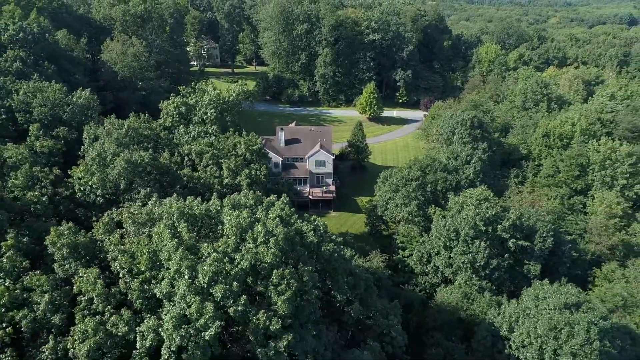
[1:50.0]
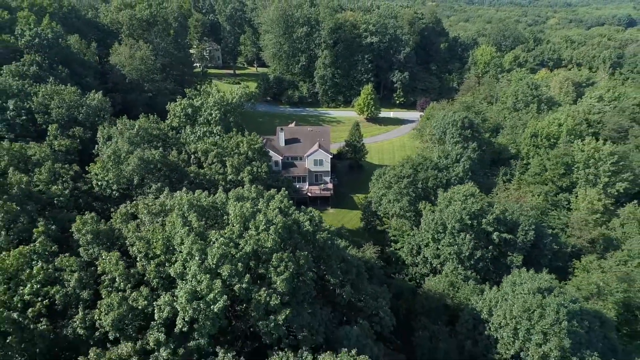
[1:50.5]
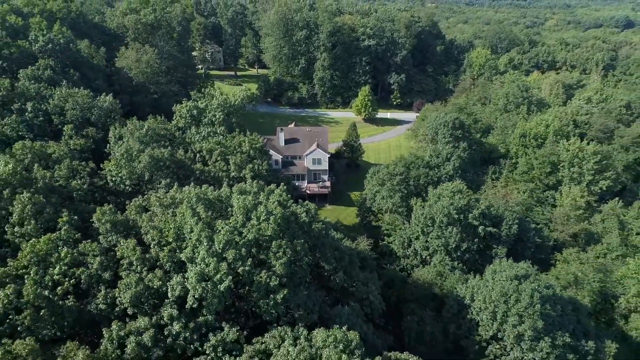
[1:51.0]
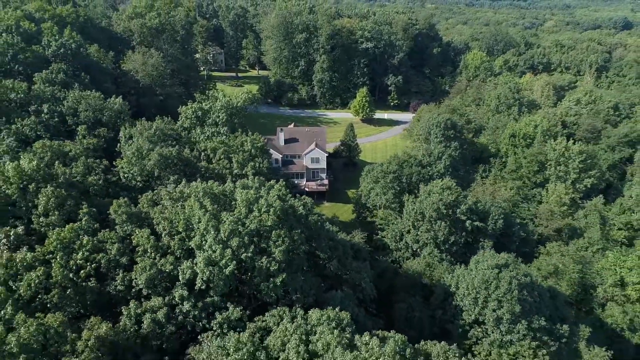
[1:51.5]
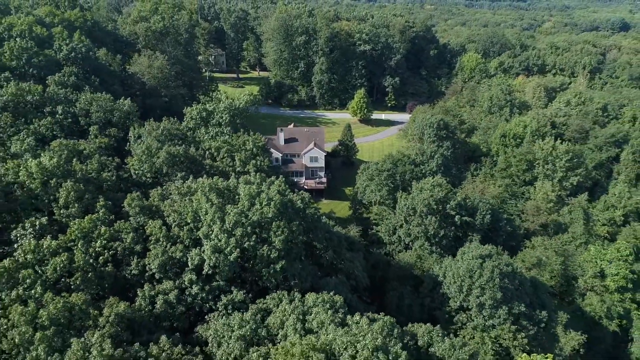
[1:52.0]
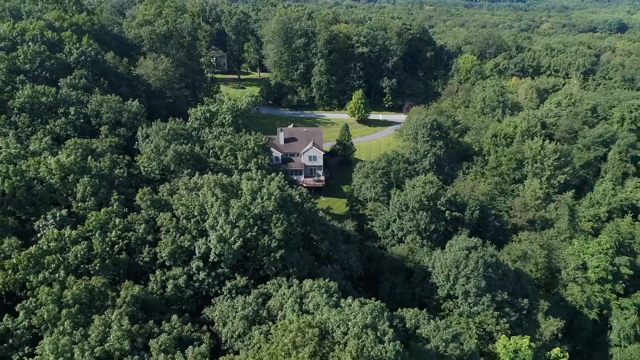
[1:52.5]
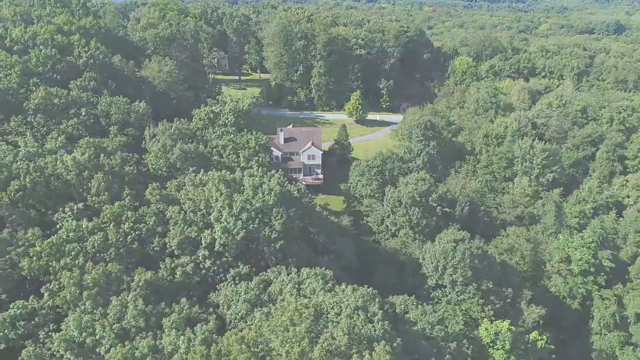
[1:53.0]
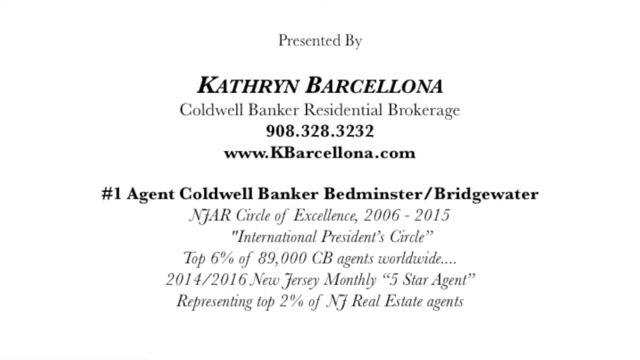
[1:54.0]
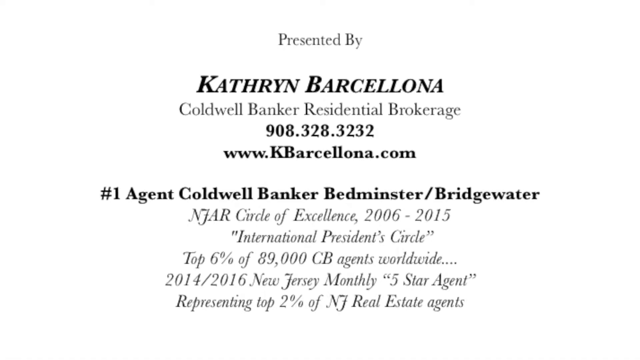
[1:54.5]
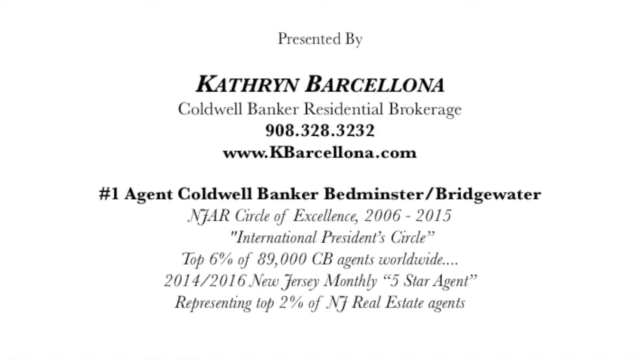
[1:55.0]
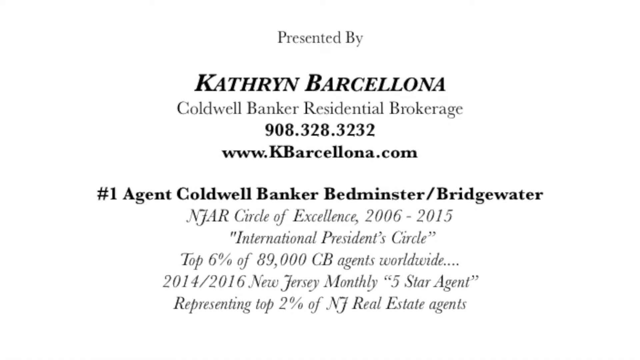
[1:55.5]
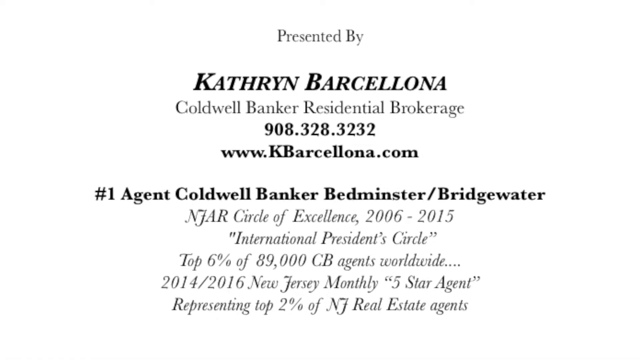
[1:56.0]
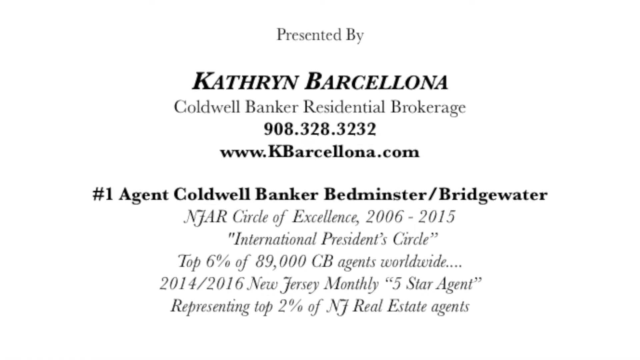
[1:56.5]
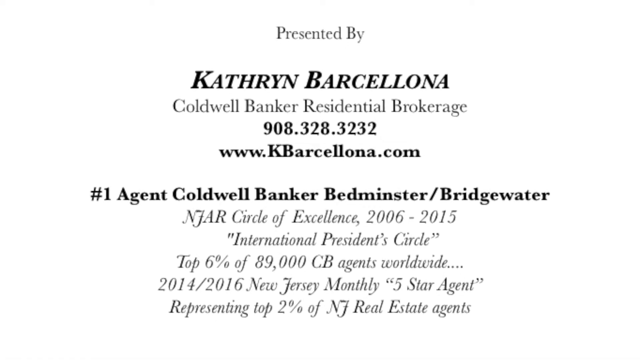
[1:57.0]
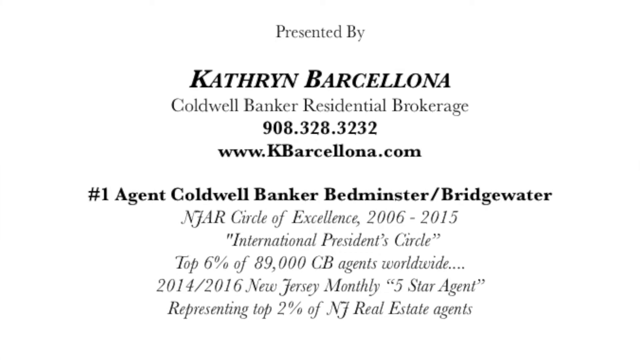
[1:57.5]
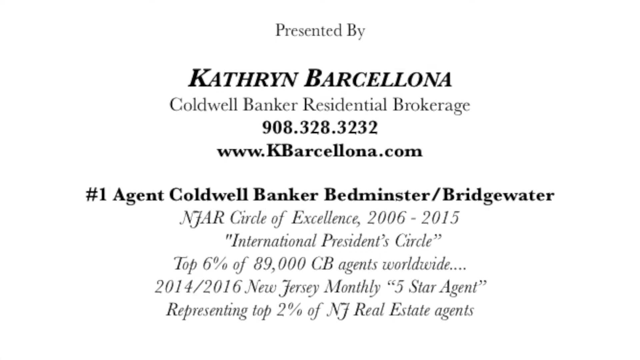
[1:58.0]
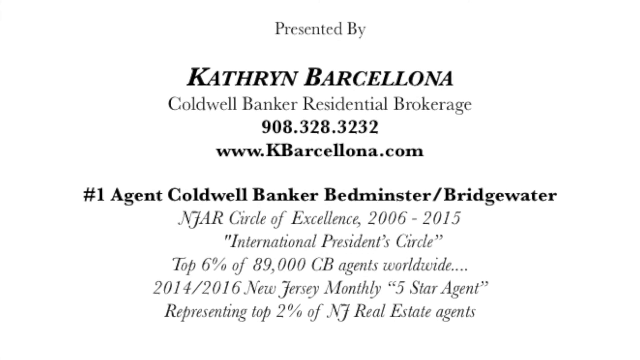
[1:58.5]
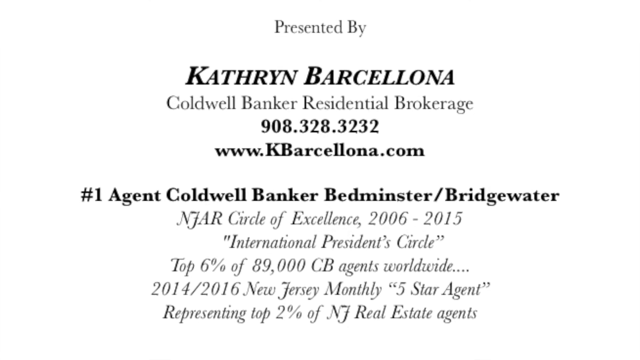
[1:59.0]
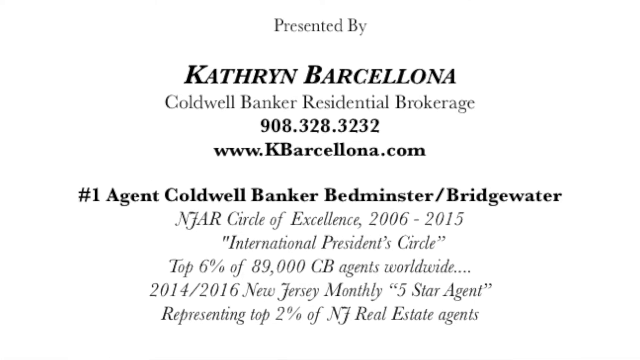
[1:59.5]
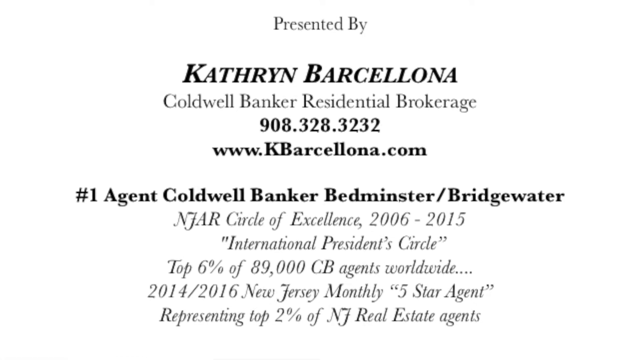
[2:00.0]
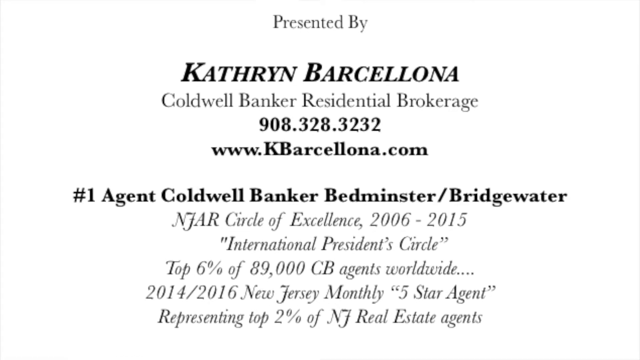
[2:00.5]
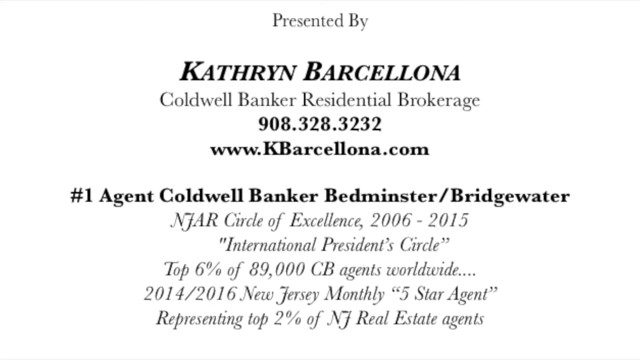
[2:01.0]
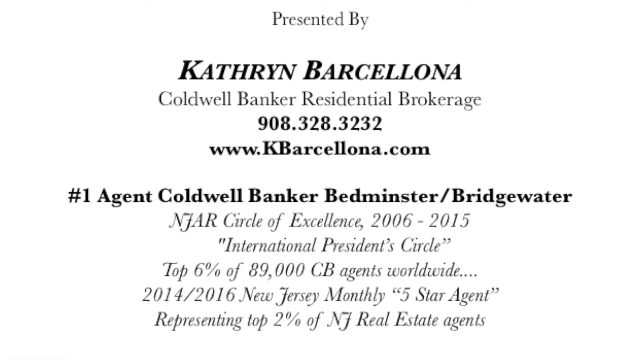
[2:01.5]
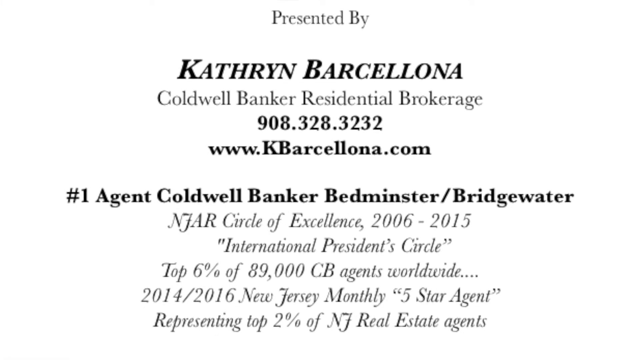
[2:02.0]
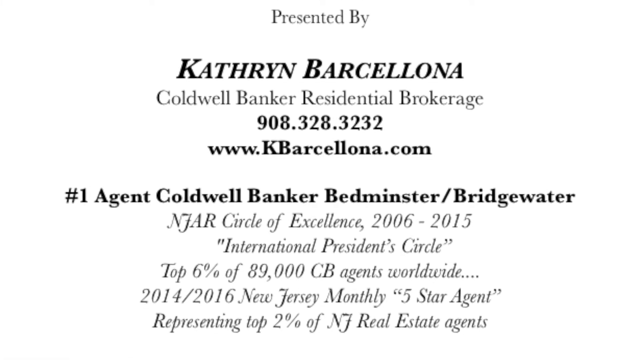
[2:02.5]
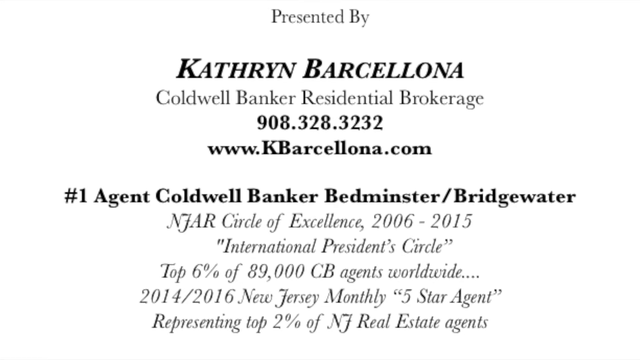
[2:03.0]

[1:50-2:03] The drone view shows all the trees surrounding the very large two-story house as it pans out. Then writing appears: "Catherine Barcelona Caldwell Bank a residential brokerage", apparently the agent representing the property. The camera kind of pans in closer to the writing as the video ends.